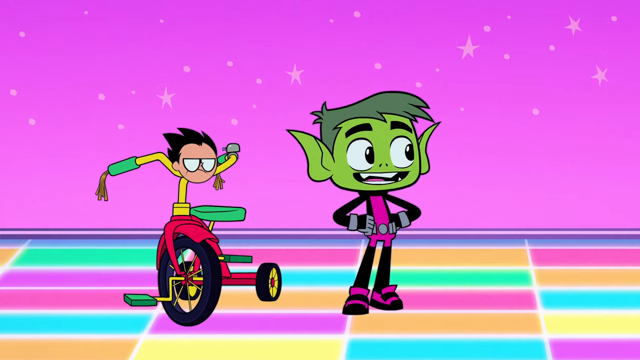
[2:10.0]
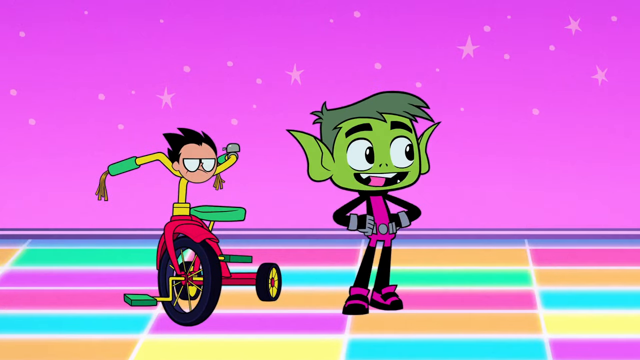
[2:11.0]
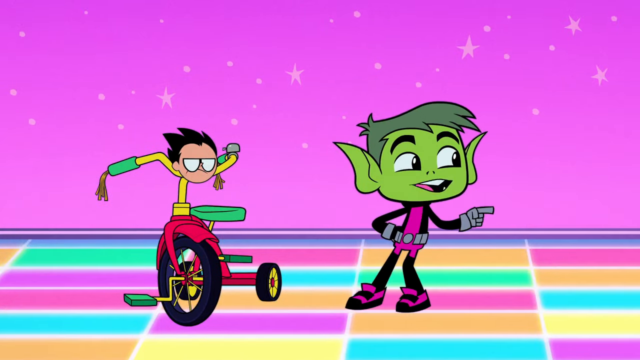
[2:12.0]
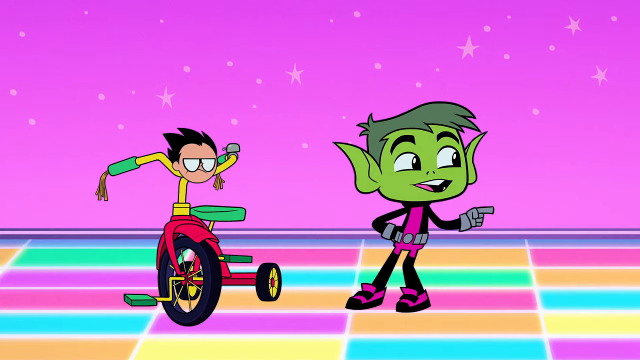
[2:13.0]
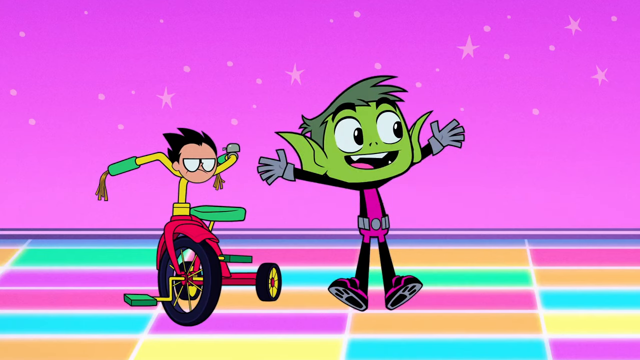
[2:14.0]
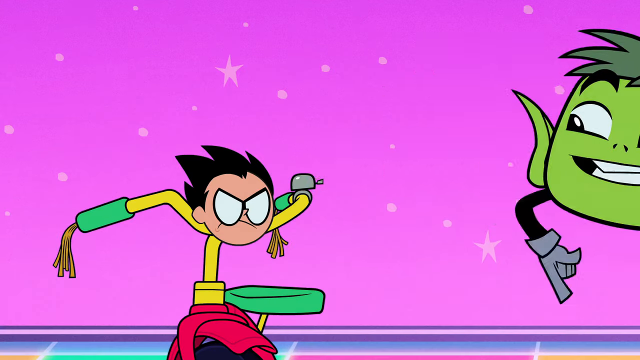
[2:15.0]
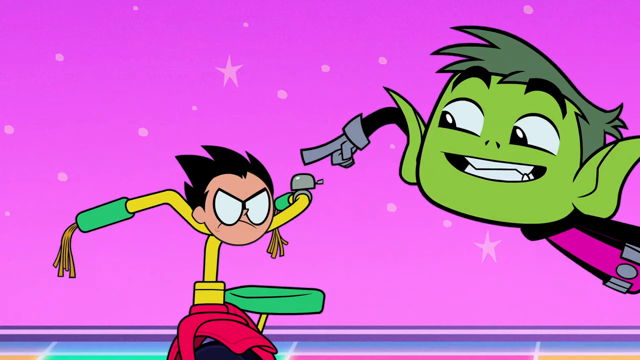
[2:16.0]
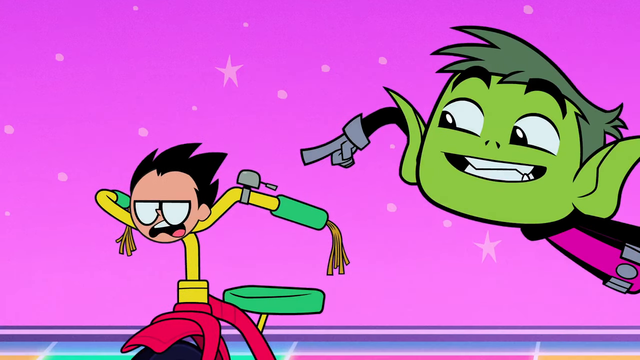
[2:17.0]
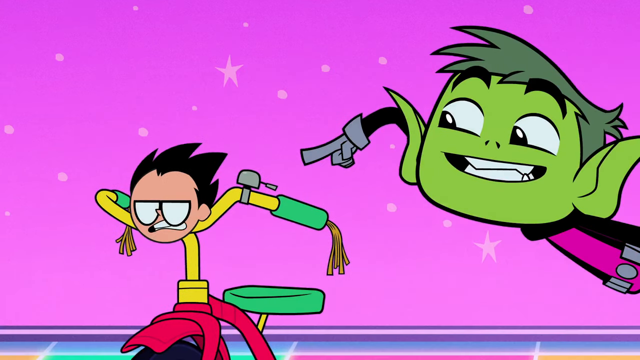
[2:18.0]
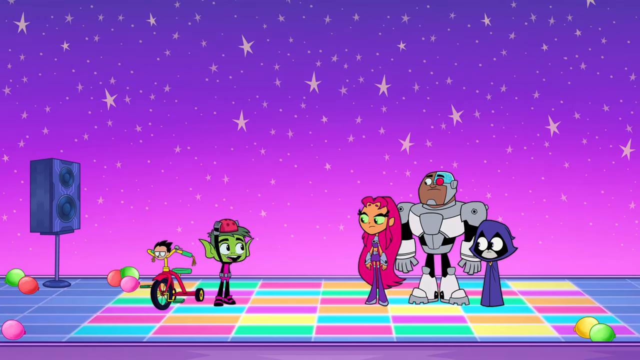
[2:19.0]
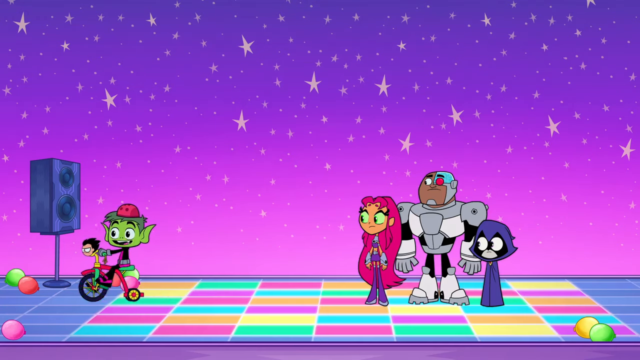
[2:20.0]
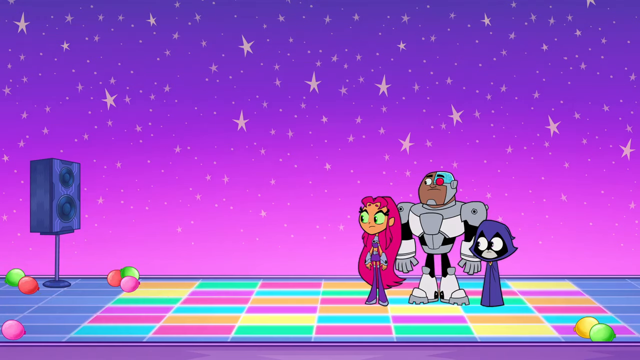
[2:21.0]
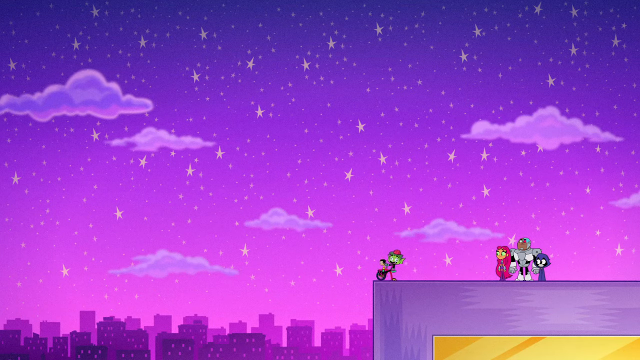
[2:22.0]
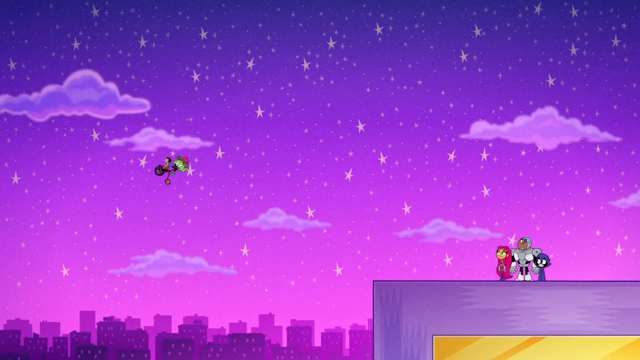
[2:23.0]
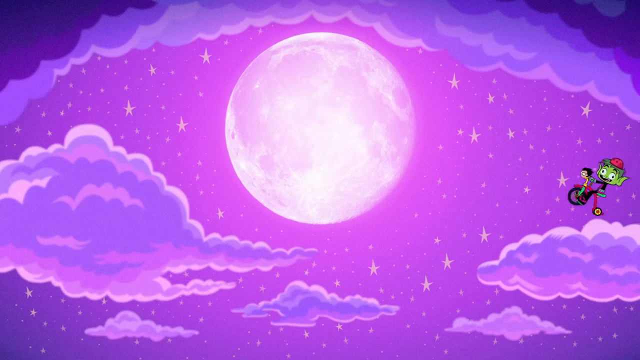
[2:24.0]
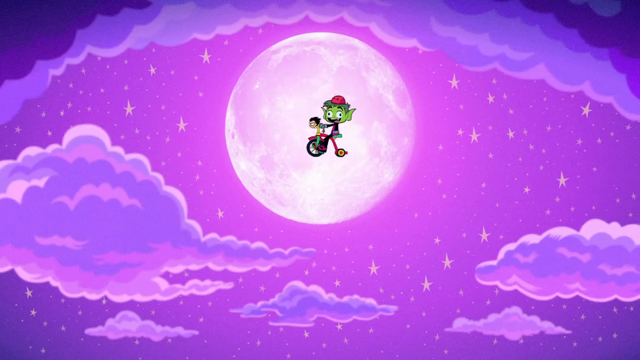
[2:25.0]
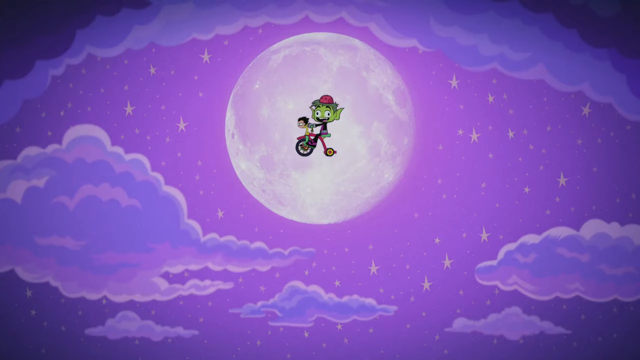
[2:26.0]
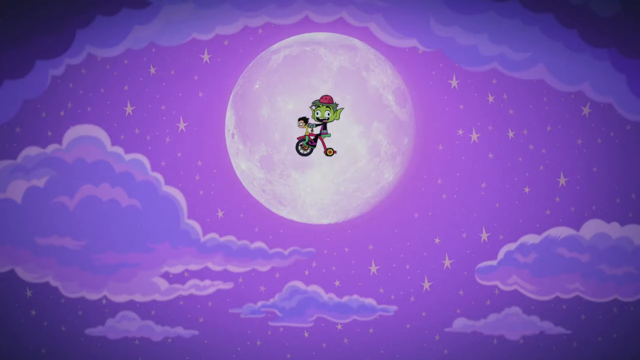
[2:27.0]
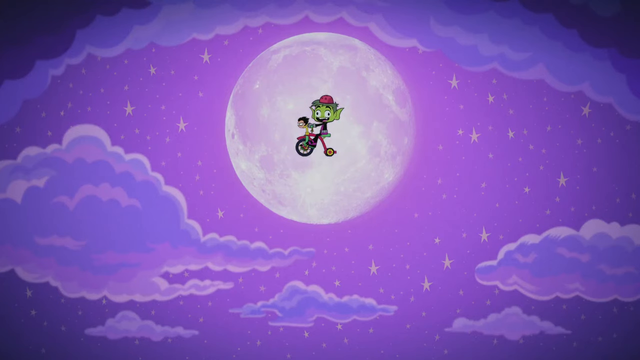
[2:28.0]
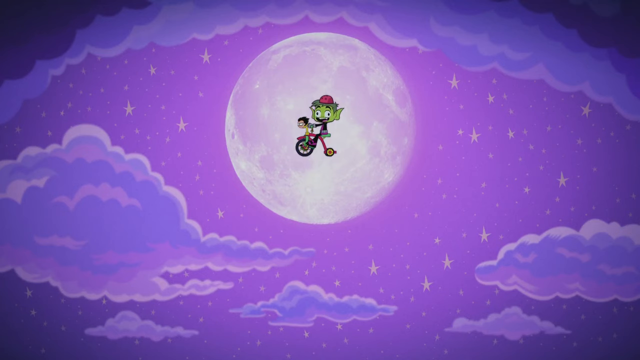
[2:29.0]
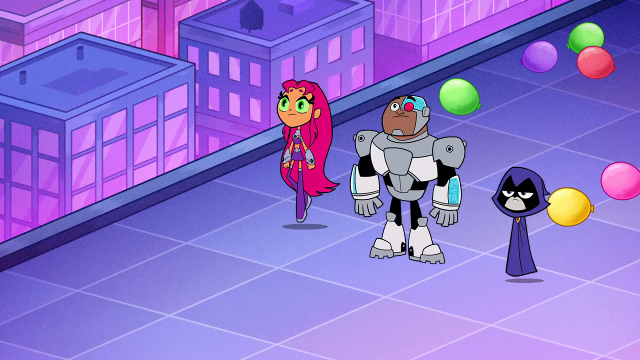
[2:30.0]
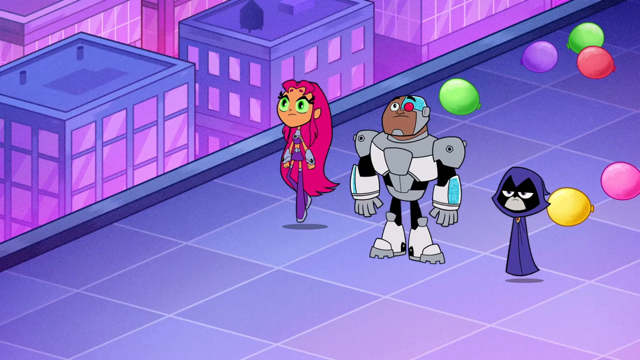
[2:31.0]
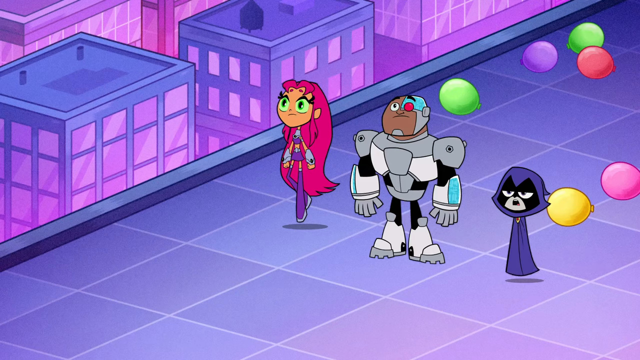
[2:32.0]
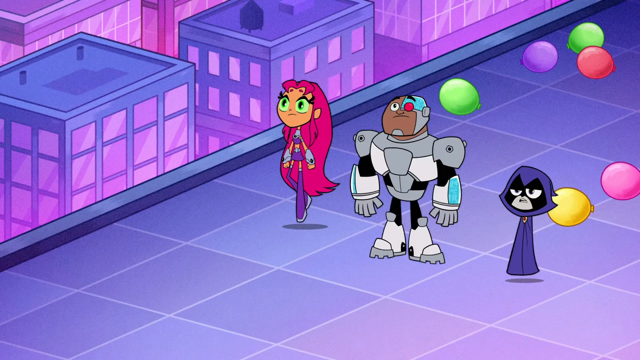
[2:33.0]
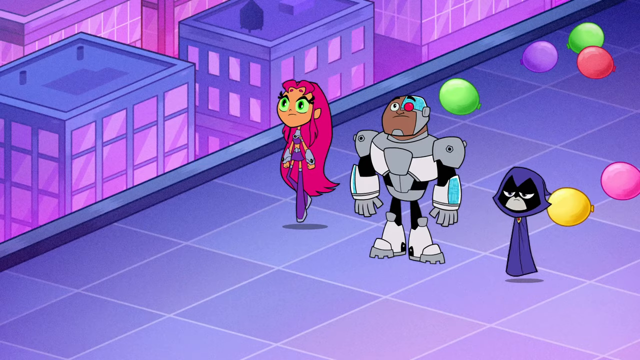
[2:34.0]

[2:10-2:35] The green goblin guy is in the room with the fancy lighted floor that looks like it is from the 1970s and the pink background with stars. He sits next to Robin and looks happy that Robin is here as a tricycle. He says something to his friends, points at them, and jumps up, seeming really happy. He messes with the bell on Robin's tricycle, and Robin is upset. The green goblin puts a hat on and says something to the three friends, the cyborg, the pink-haired girl and the cat in a cloak, then jumps on the tricycle and drives away. Speakers and party balloons are now visible, so this is apparently where the party first started. He drives off and jumps into the sky, which is pink and purple with stars and clouds and looks like nighttime. He flies up past a pink moon with purple clouds around it, wearing the hat, looking like an E.T. version. The image stops with him looking out at the screen and everything kind of dark. Then it pans back to his friends: the cat in the cloak, who does not look happy, the cyborg, and the girl with the green laser eyes. There is purple everywhere and balloons everywhere, and they are looking to see what happens. The cat says something, seeming annoyed. The cat hovers over the ground with no legs, seeming to just float in the air.